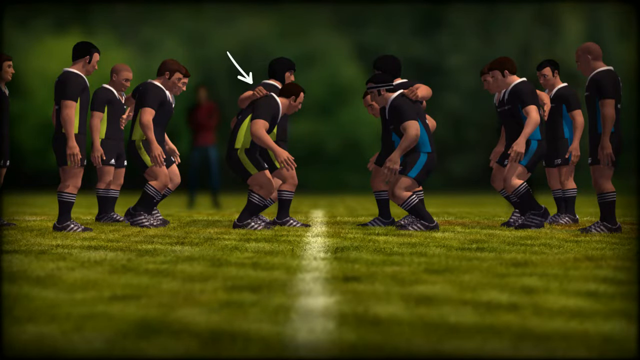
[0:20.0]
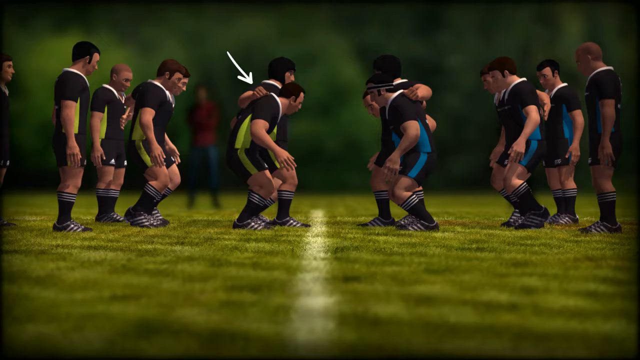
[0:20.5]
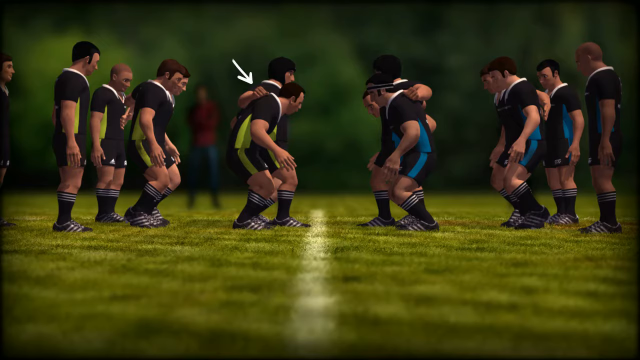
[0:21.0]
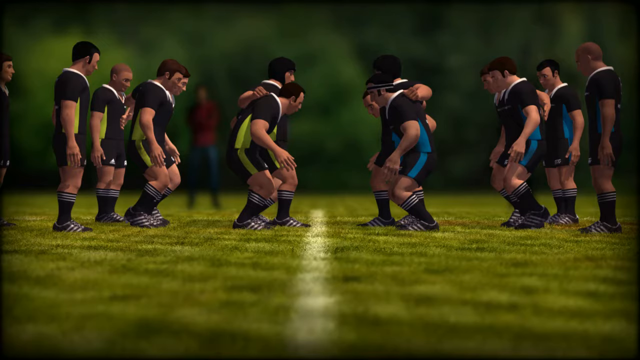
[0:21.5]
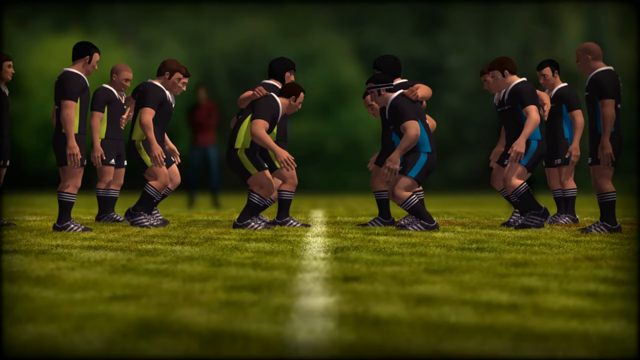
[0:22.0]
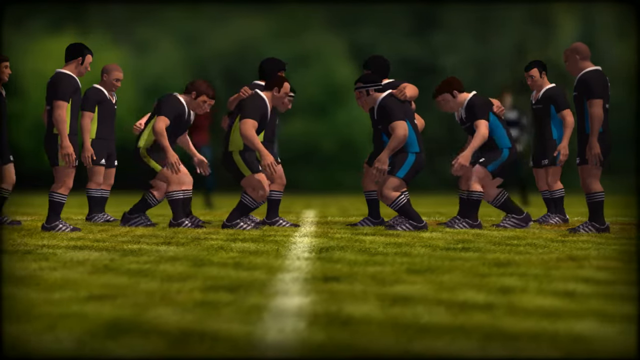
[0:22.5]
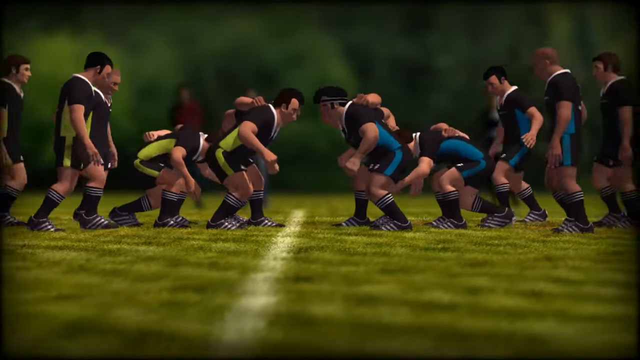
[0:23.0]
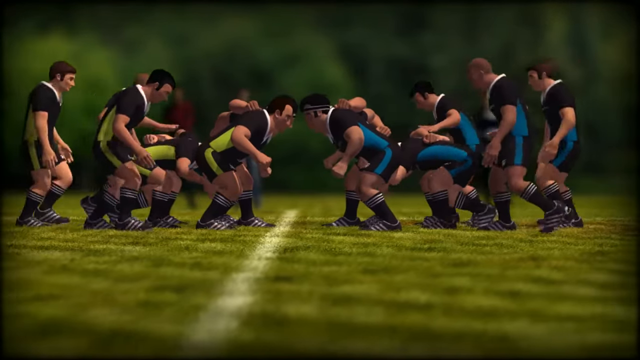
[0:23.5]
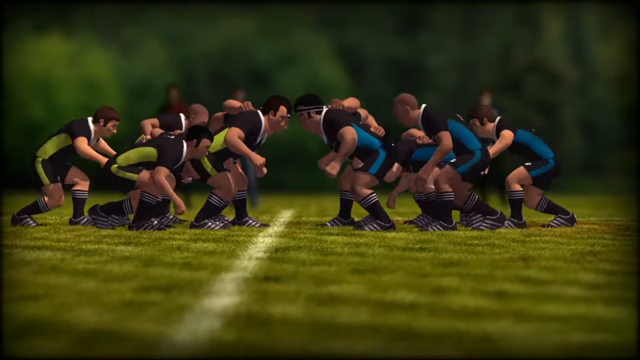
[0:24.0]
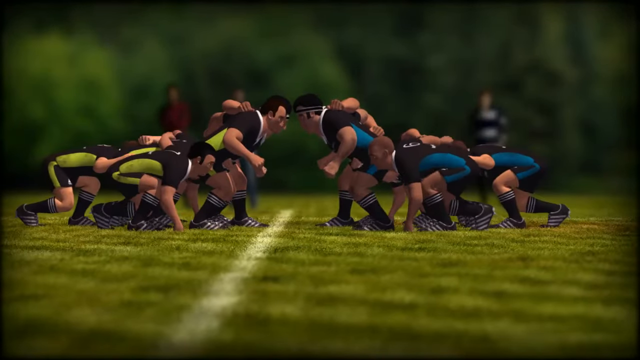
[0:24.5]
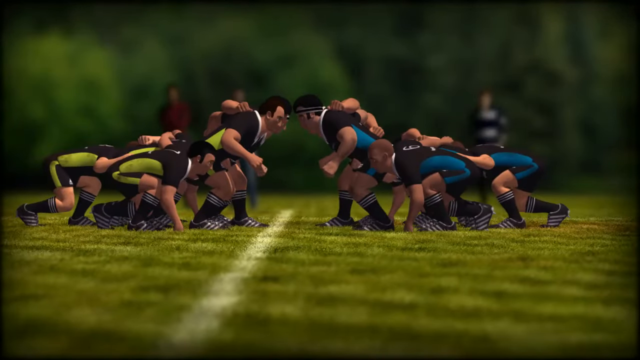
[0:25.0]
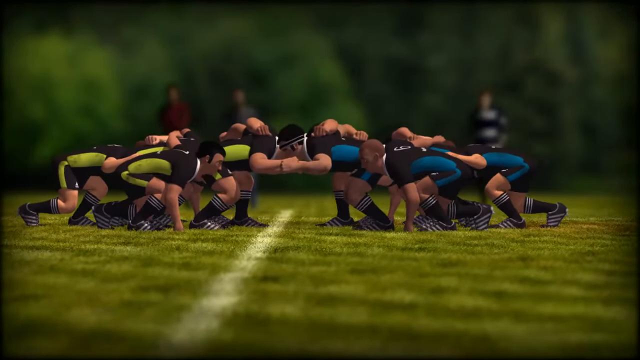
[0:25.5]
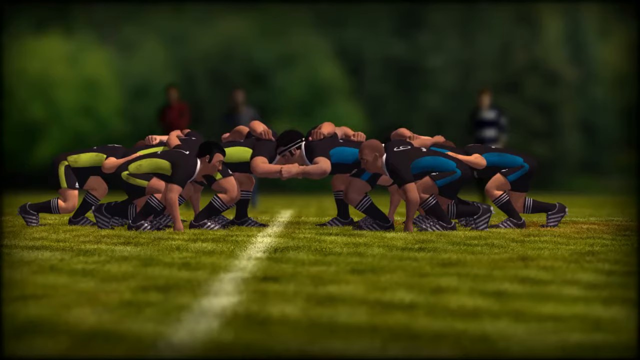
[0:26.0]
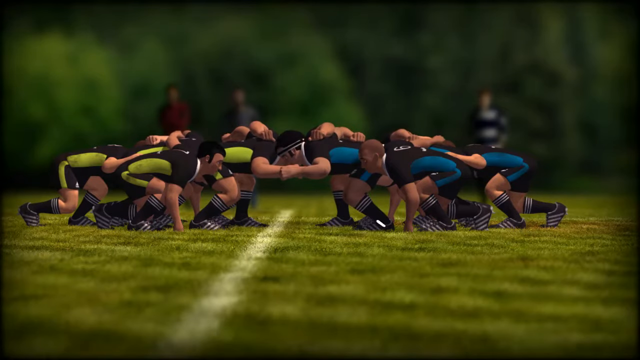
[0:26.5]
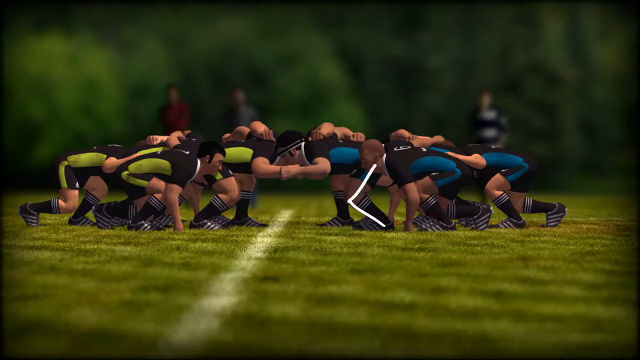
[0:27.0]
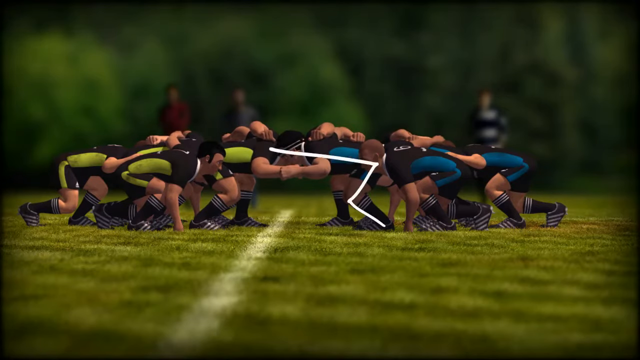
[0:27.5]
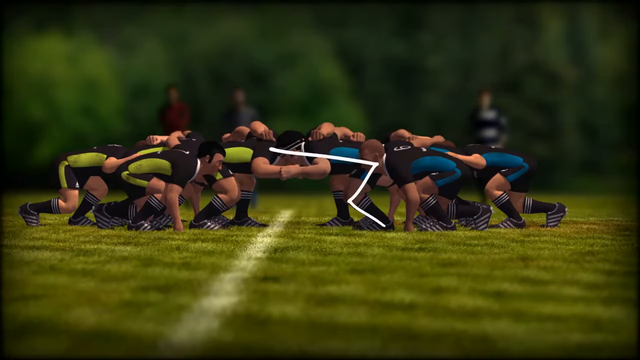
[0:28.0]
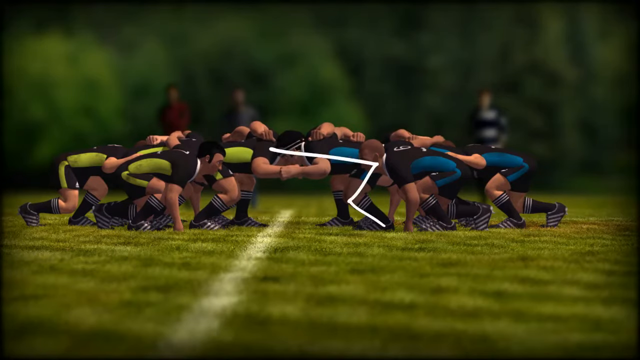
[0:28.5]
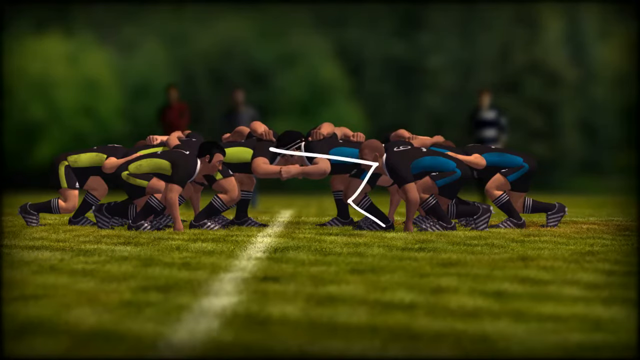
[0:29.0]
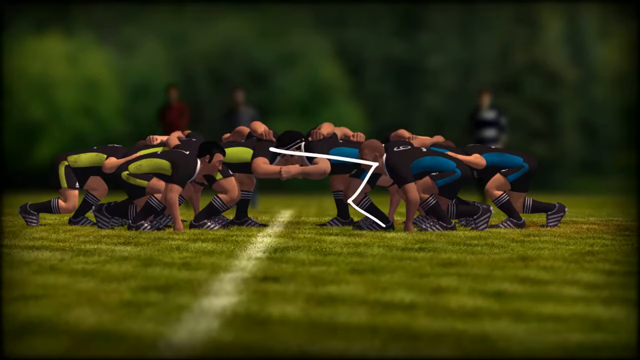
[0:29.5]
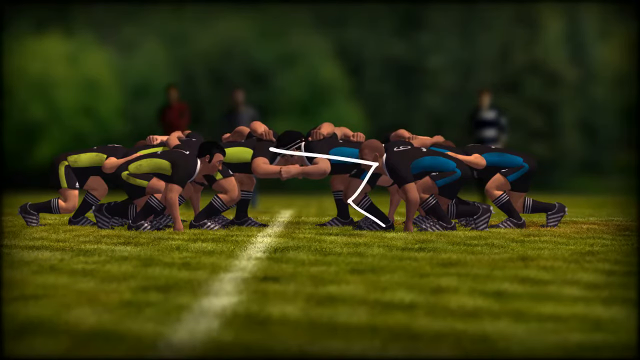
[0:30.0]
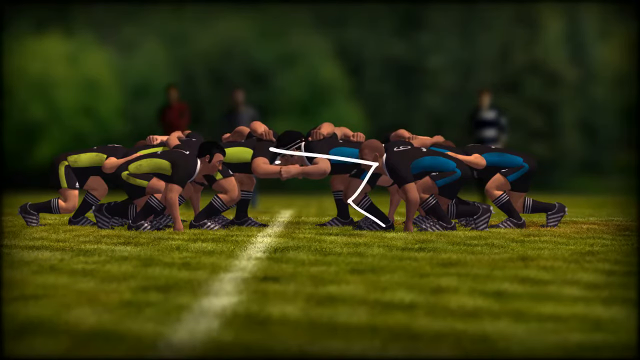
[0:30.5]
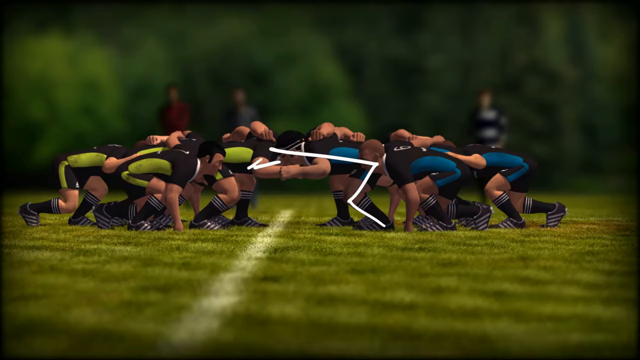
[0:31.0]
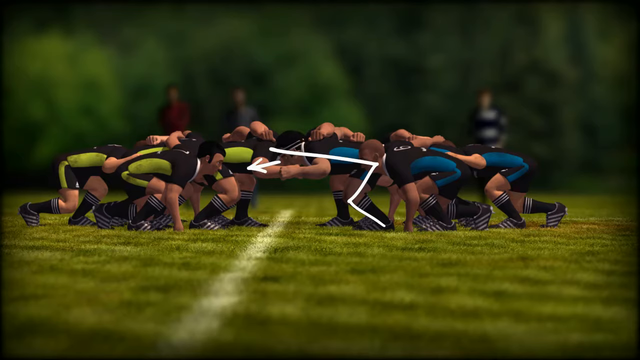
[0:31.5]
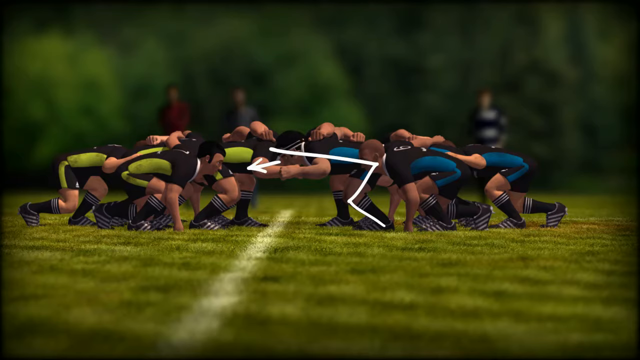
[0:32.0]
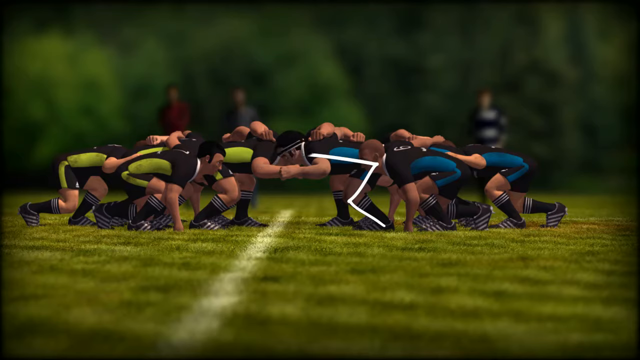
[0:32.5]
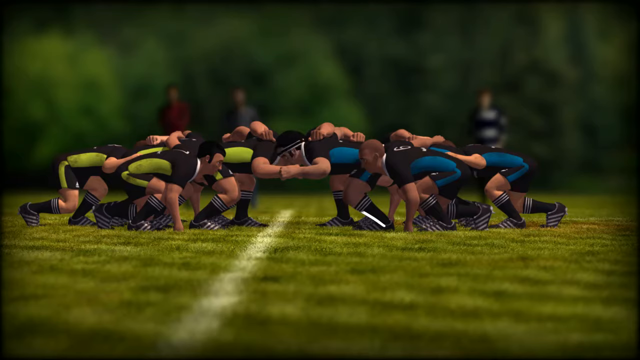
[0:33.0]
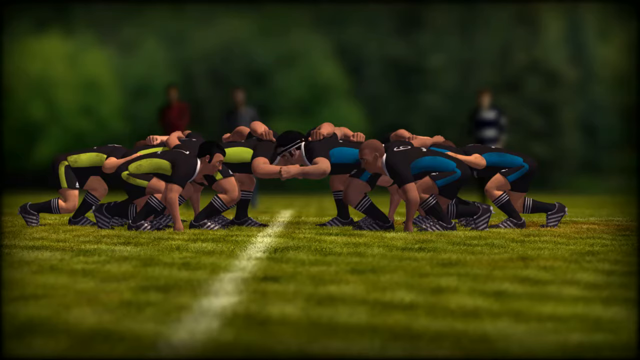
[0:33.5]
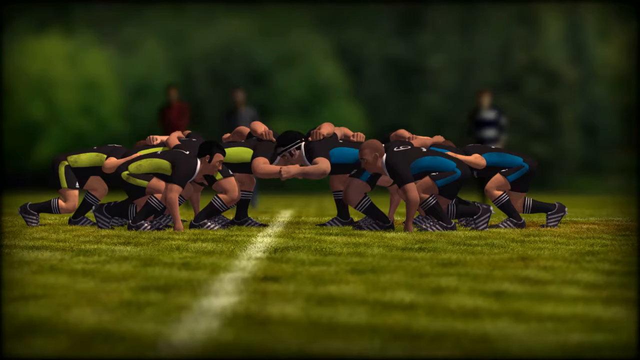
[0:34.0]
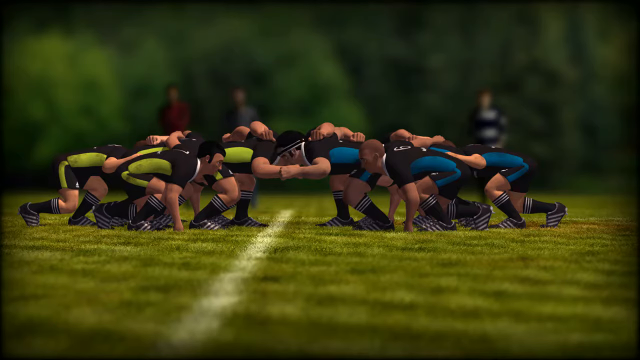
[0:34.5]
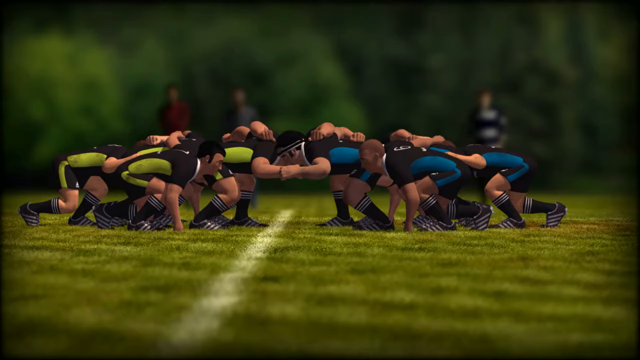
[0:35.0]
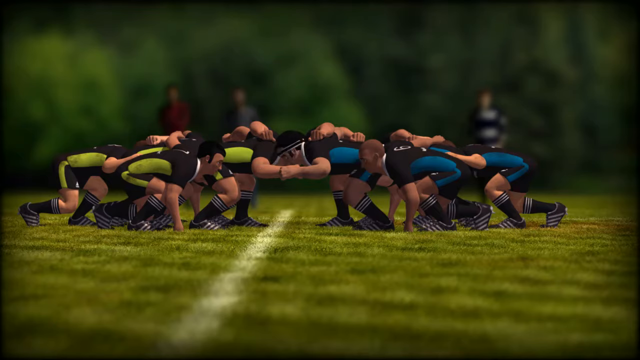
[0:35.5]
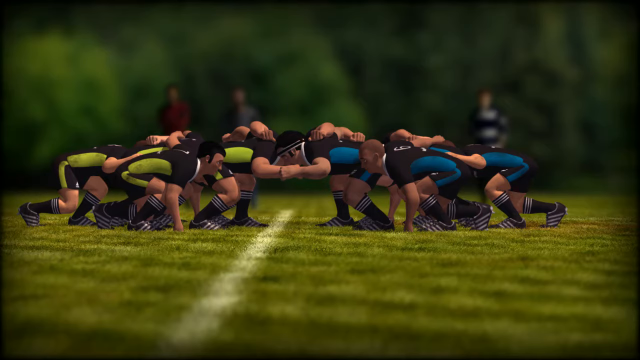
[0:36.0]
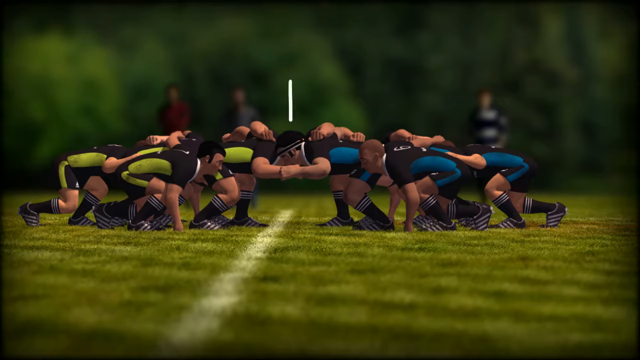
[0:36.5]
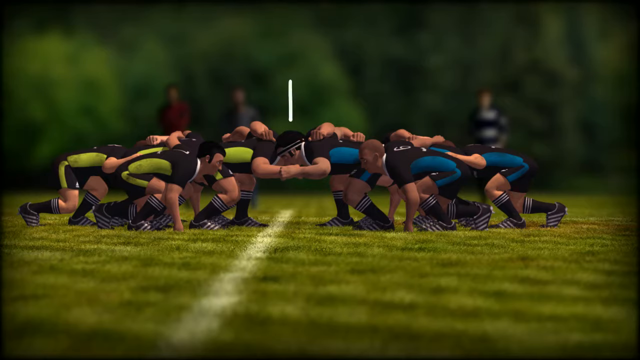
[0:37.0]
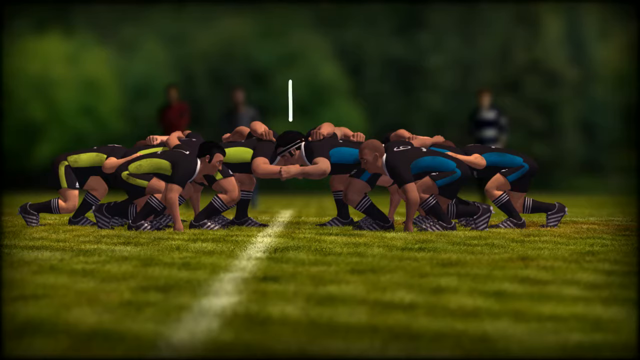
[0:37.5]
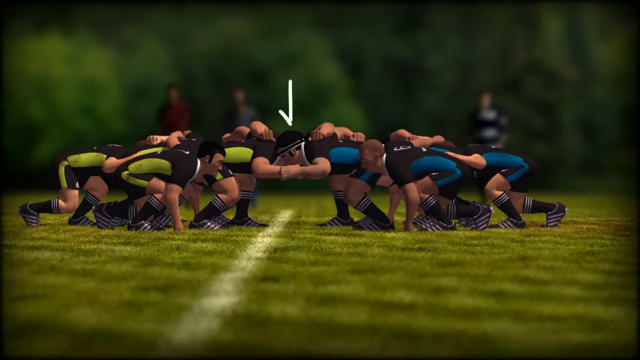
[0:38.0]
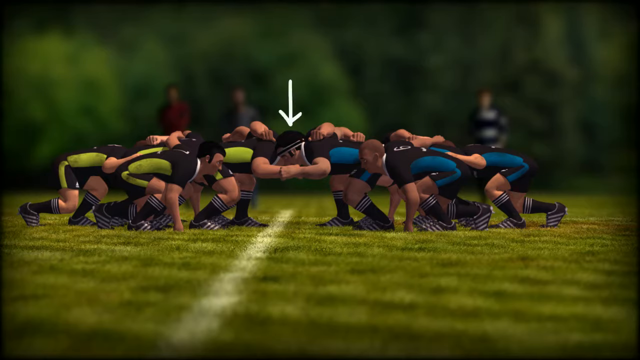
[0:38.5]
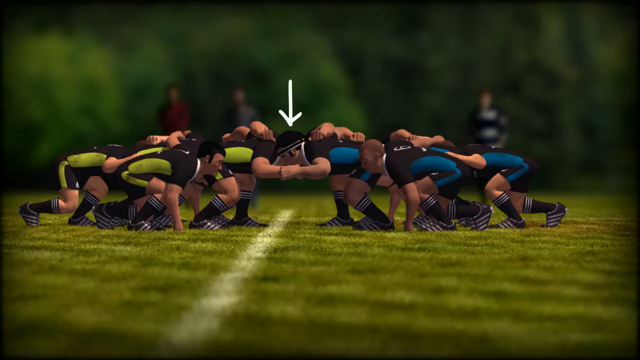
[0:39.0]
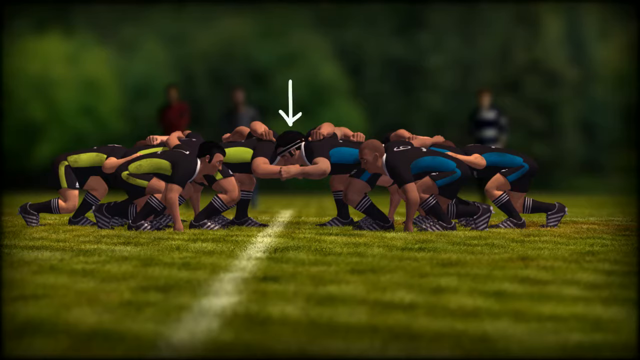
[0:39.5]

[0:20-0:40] The video continues to explain how a scrum takes place in a rugby union match, using a three-dimensional graphical illustration of a scrum between two teams. The first team wears black shirts and black shorts with green stripes; the second team wears black shirts and black shorts with blue stripes. First, a white arrow points to the team members in the front row. All the team members from both sides then crouch: the front-row players of both teams crouch at 45 degrees, and the players in the second and third rows crouch further down behind the front row. The opposing players then crouch against one another so that their heads and shoulders are interlocked. A squiggly zigzag white line is drawn at 90 degrees to the direction of the front players, and a white arrow is drawn pointing at the head of one of the front-row players.